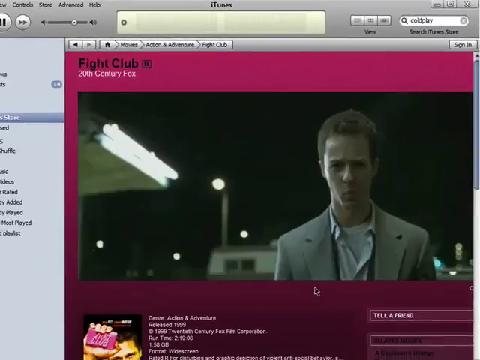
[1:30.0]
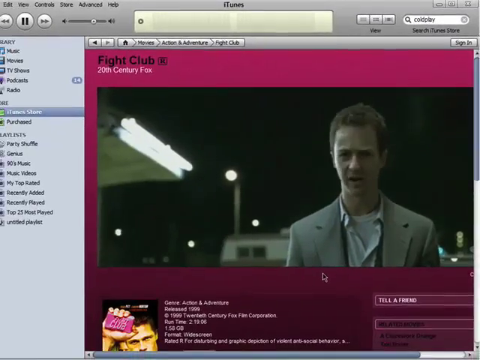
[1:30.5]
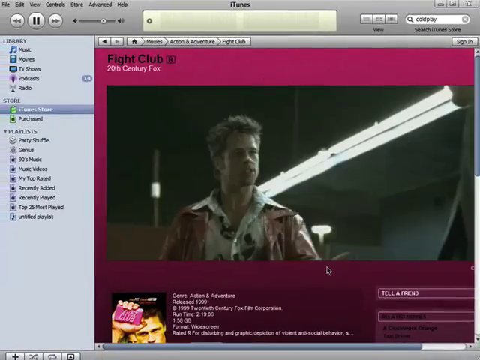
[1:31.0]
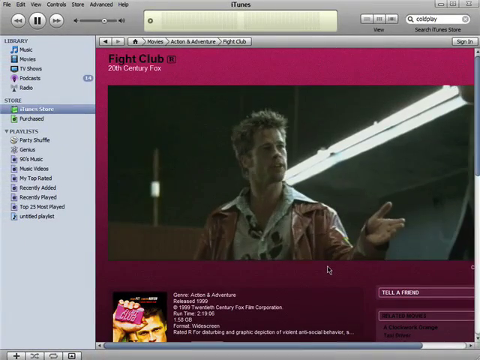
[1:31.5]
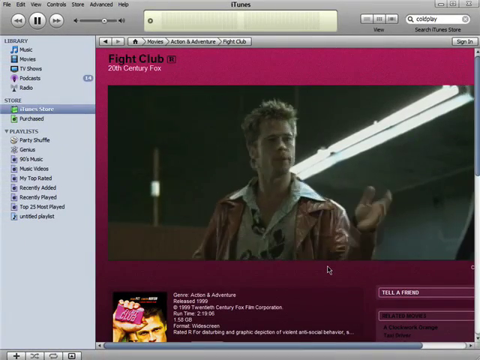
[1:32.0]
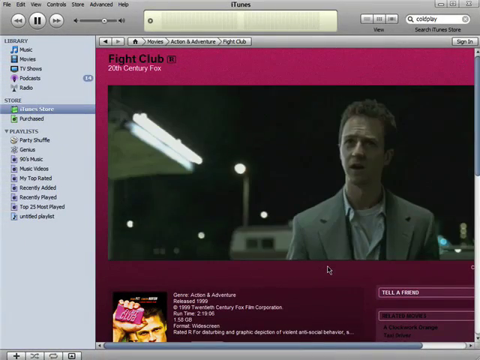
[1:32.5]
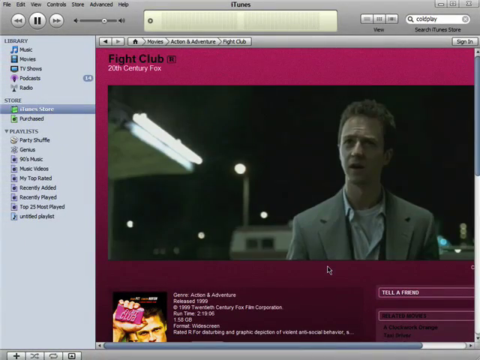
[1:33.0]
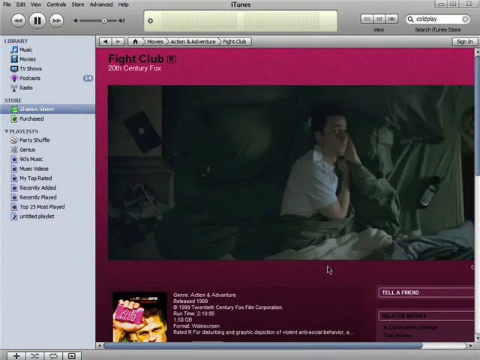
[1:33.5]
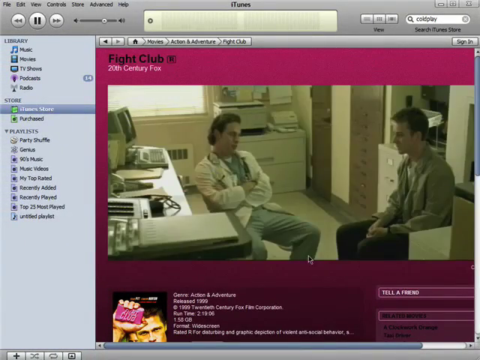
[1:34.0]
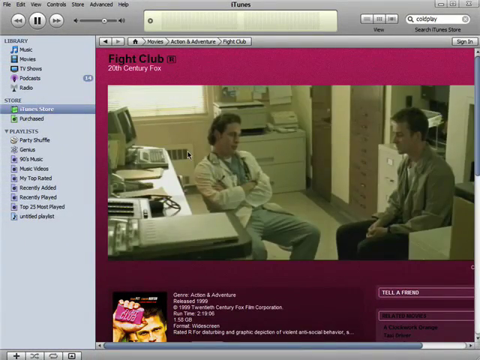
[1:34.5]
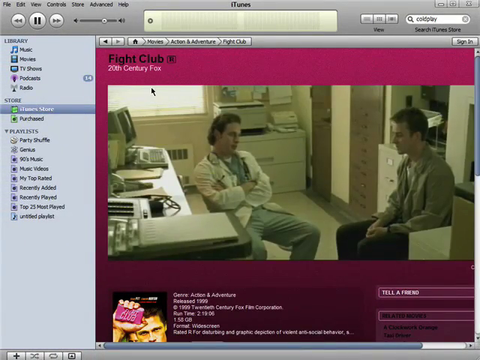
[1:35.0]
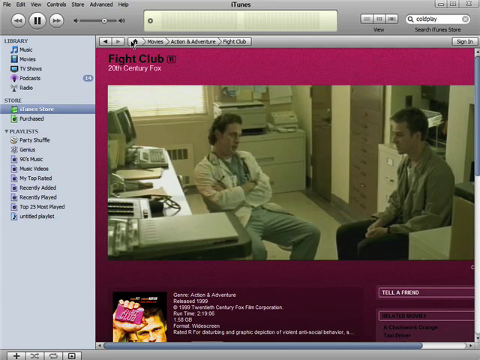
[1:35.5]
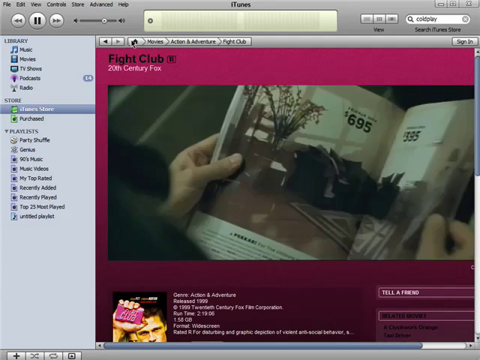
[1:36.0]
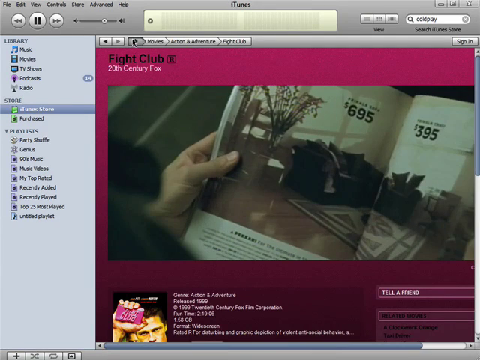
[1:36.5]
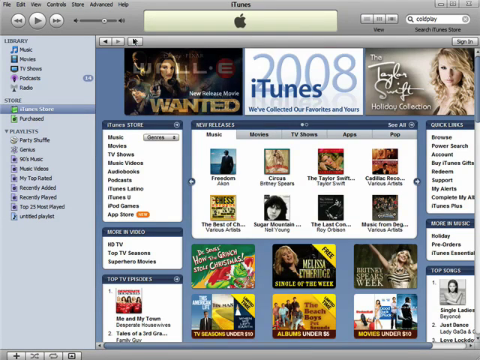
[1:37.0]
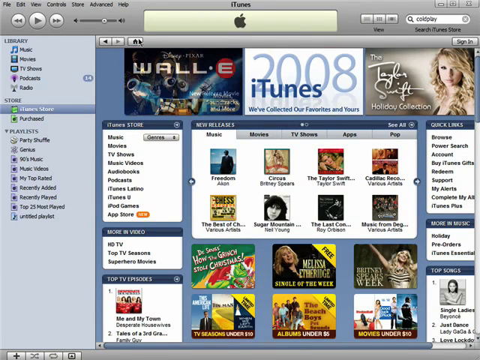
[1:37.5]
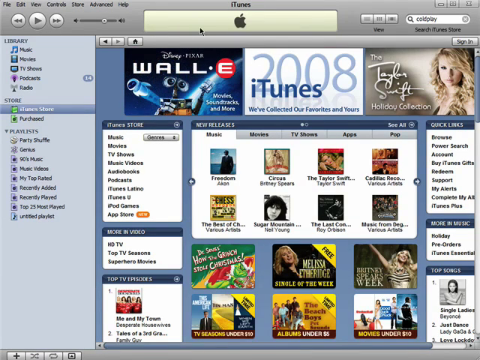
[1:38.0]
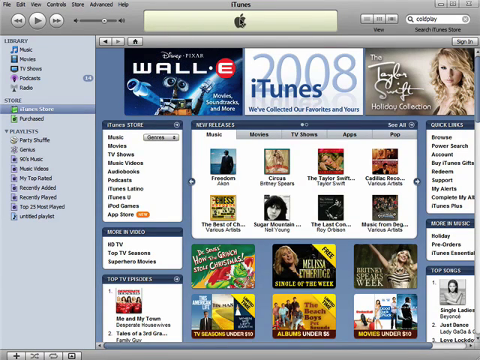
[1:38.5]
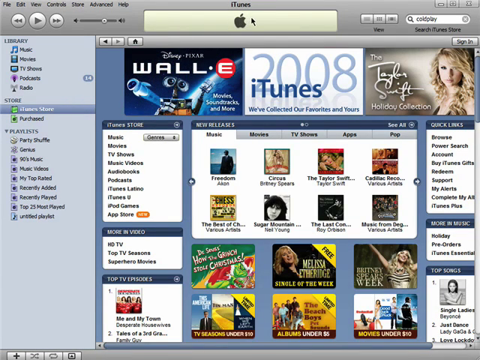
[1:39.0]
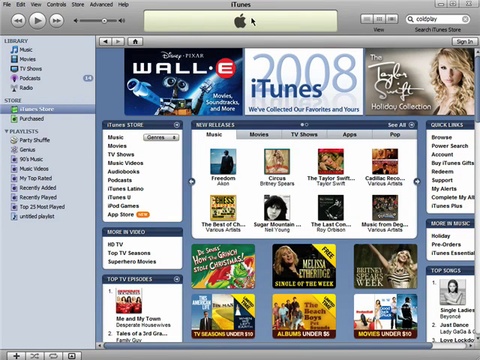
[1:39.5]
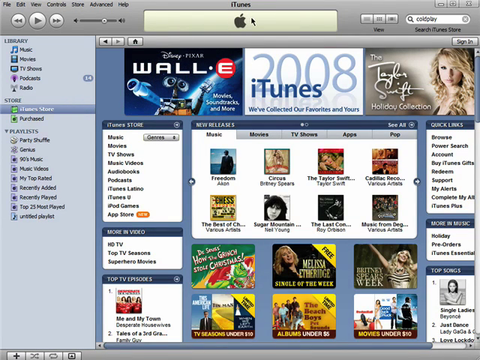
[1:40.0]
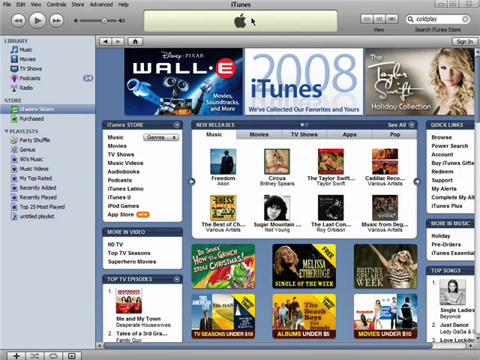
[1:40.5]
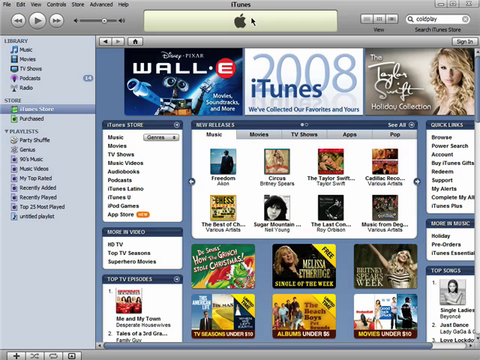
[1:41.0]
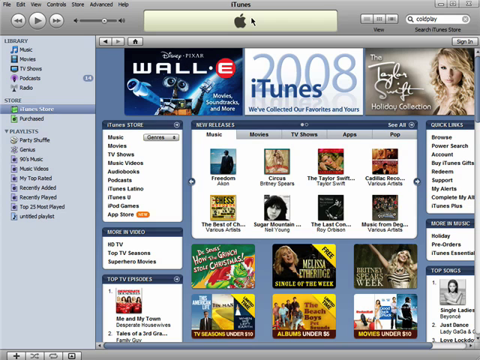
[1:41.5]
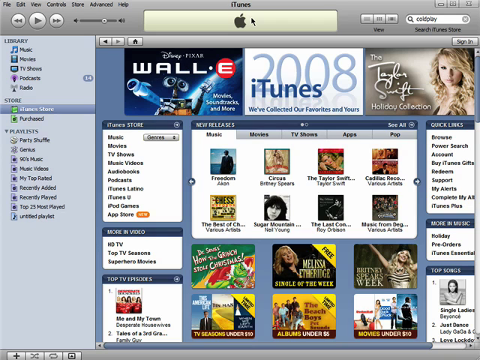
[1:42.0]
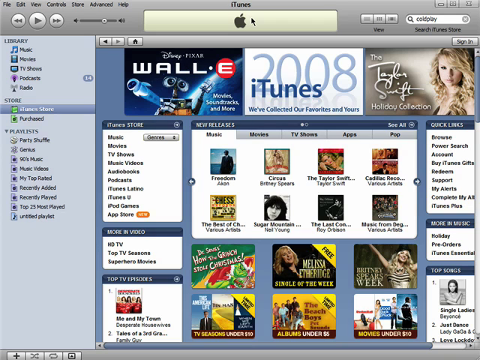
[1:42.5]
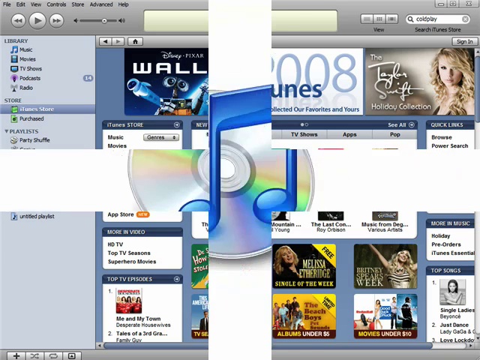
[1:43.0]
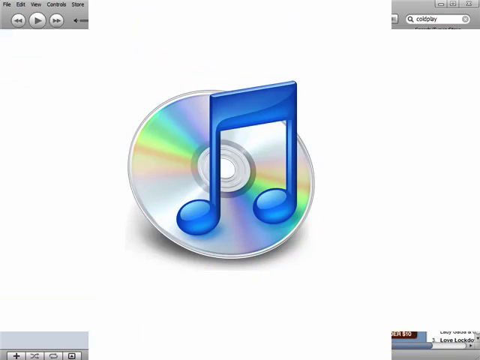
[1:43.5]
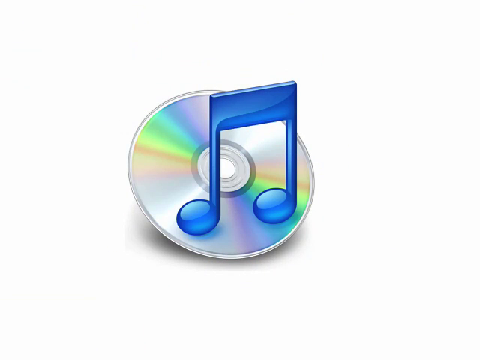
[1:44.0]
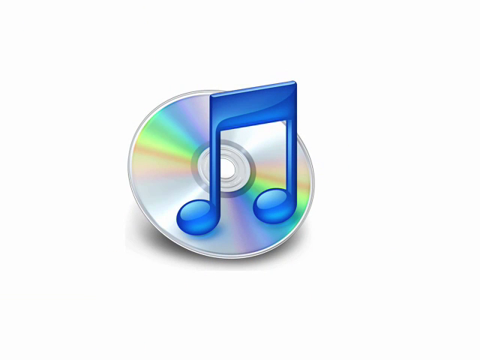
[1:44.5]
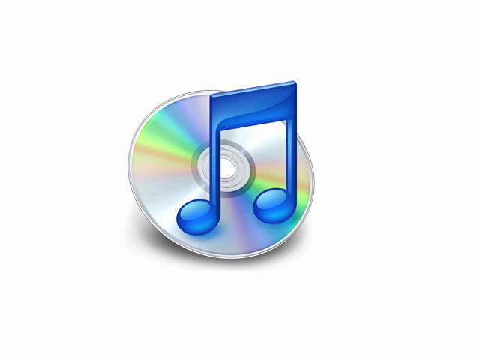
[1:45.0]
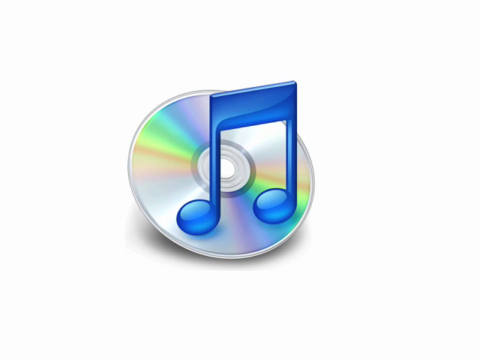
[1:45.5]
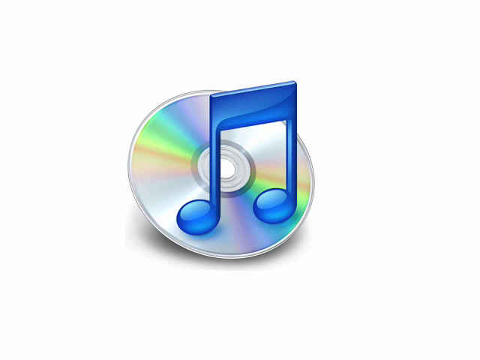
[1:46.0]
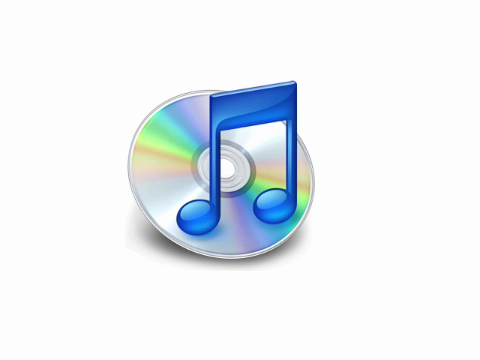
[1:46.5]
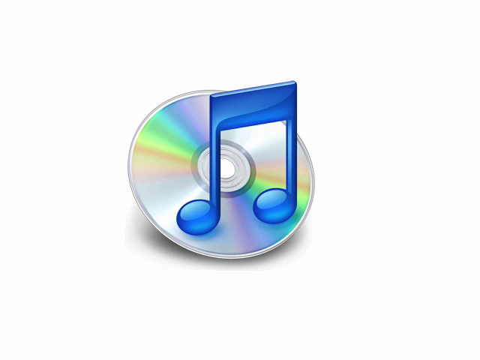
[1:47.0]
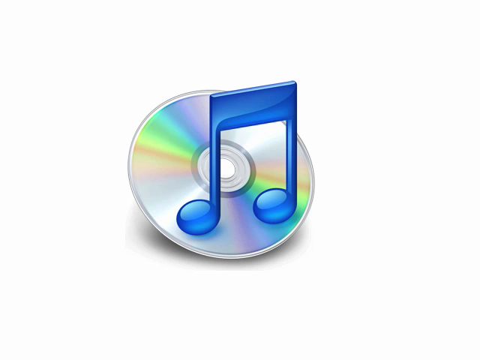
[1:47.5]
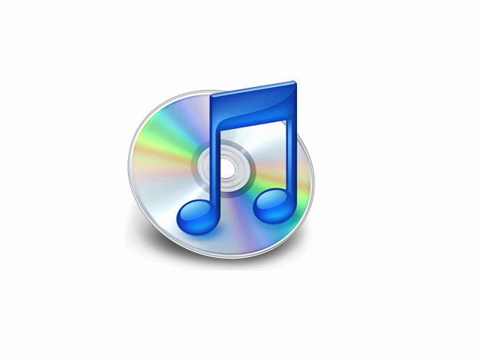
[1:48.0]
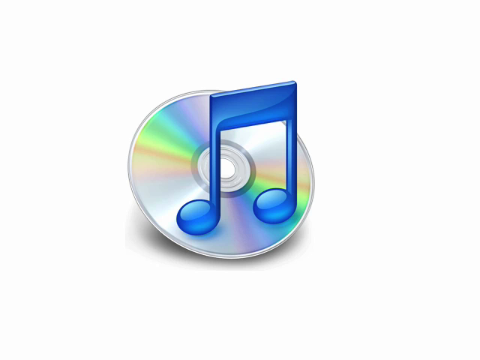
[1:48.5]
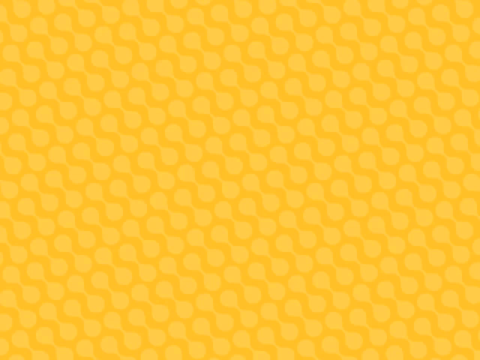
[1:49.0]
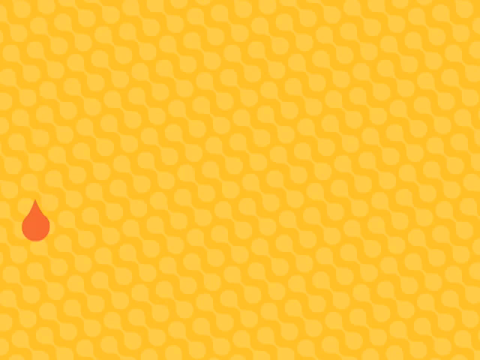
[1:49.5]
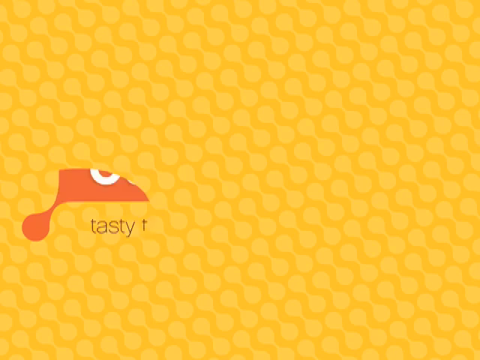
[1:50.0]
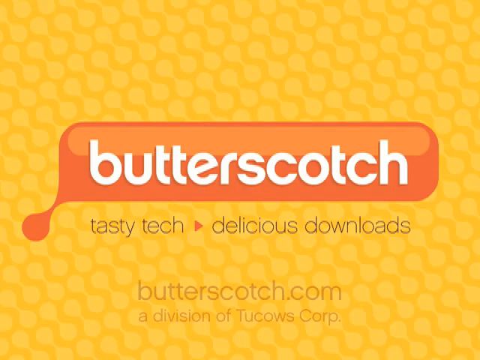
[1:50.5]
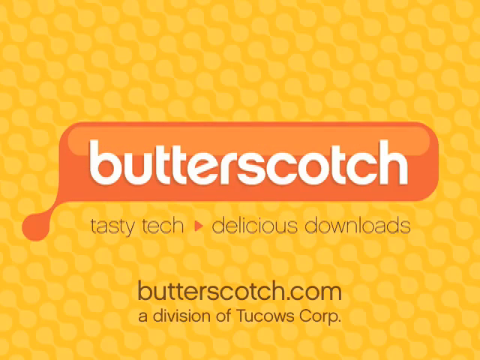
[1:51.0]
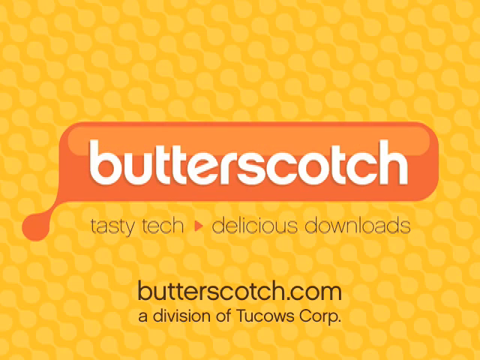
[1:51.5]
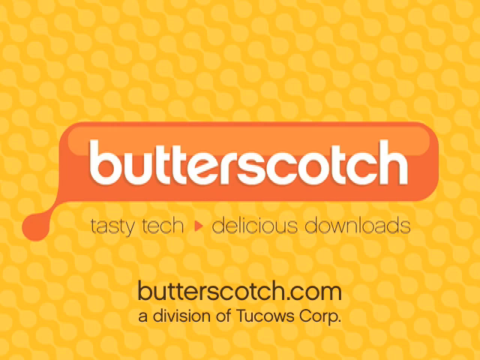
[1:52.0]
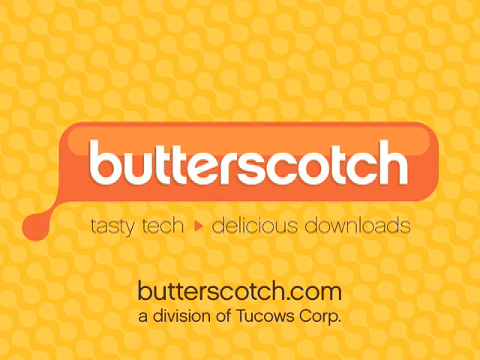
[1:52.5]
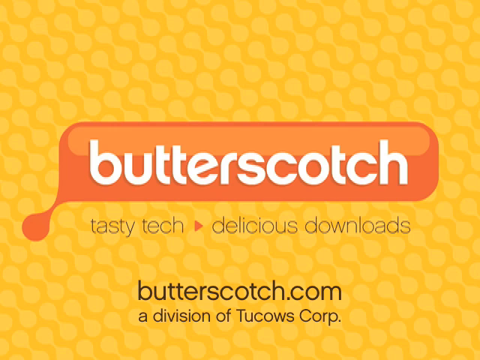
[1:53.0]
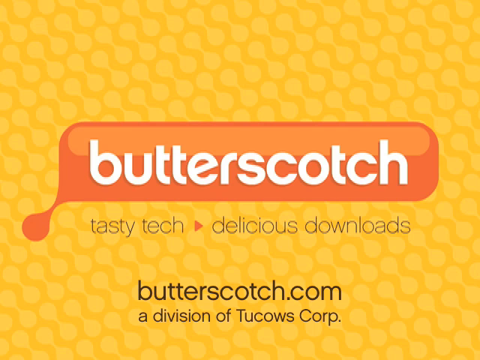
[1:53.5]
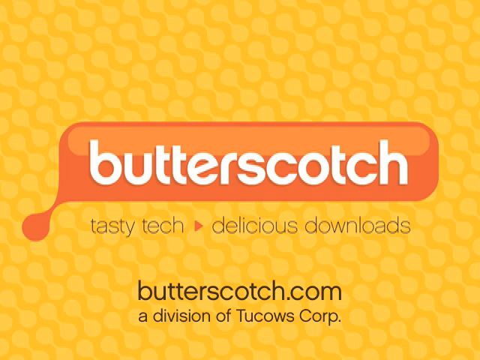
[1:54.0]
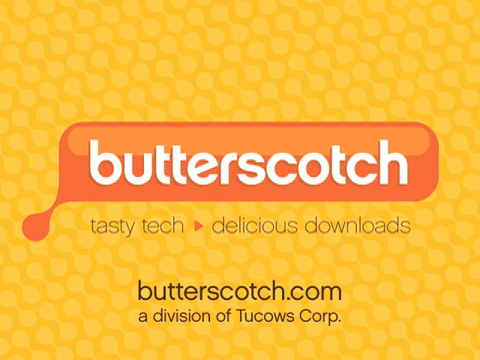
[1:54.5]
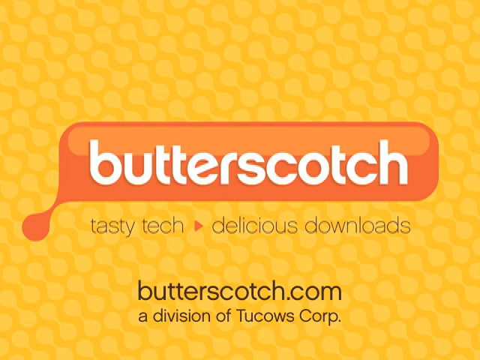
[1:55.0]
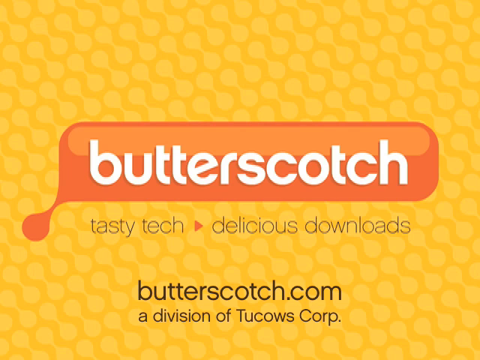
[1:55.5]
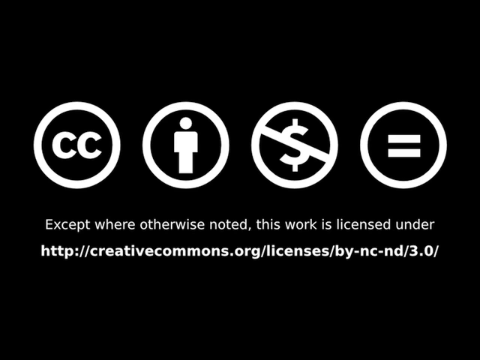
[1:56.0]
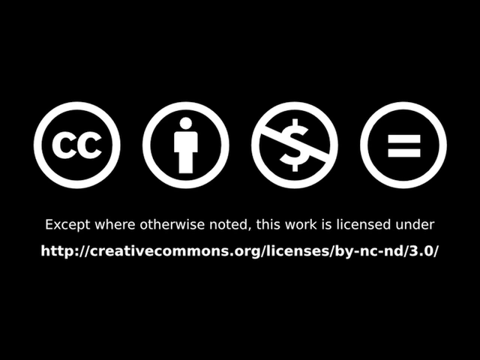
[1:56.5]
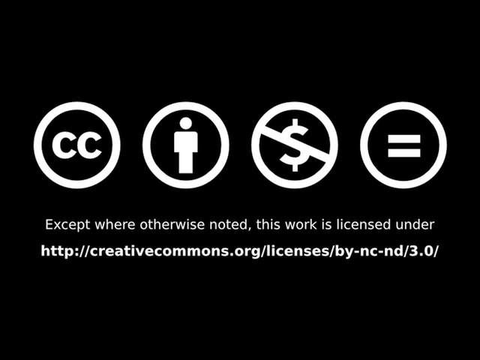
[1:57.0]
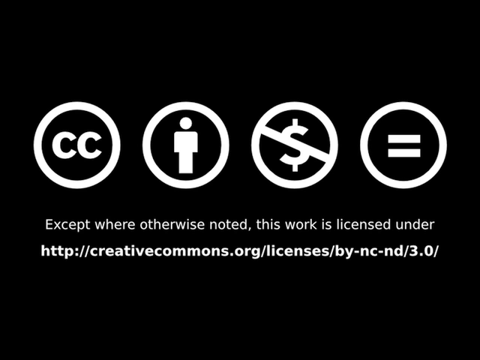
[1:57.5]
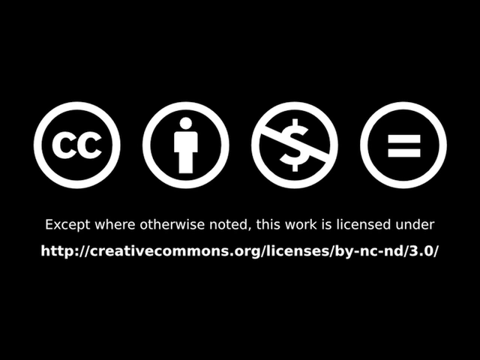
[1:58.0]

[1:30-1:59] The movie Fight Club plays, showing Brad Pitt talking to Edward Norton. Below the movie is its description: action adventure genre, released in 1999 by 20th Century Fox, a runtime of 2 hours, 19 minutes and 6 seconds, widescreen format, and rated R. The movie is stopped and the main section of the iTunes Store is opened, showing genres and releases of music, movies, TV shows, apps and more. The tutorial then seems to come to an end with another look at the back of a CD with the blue music icon, after which the Butterscotch logo appears again on the yellow screen with "tasty tech delicious downloads butterscotch.com a division of Tucows Corp" below it. The video finishes with some logos and text stating that except or otherwise noted this work is licensed under a linked website.